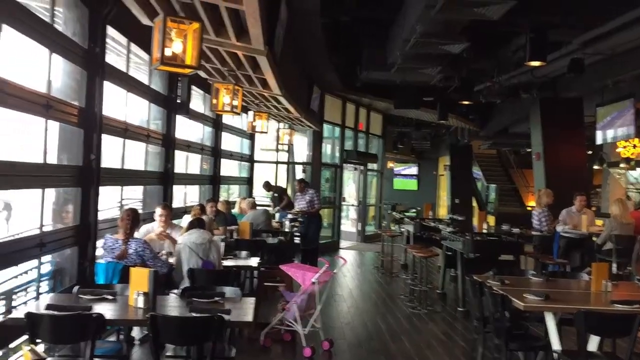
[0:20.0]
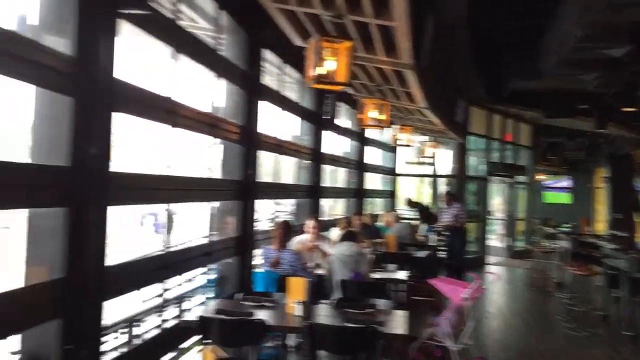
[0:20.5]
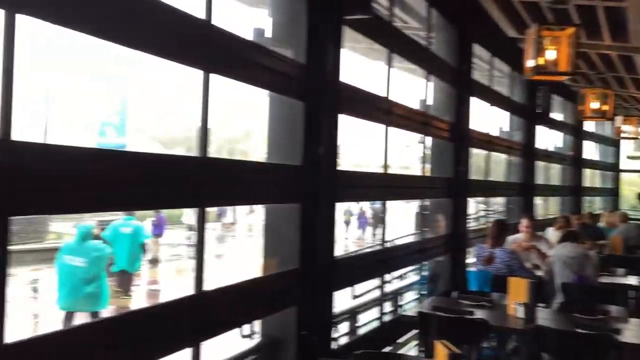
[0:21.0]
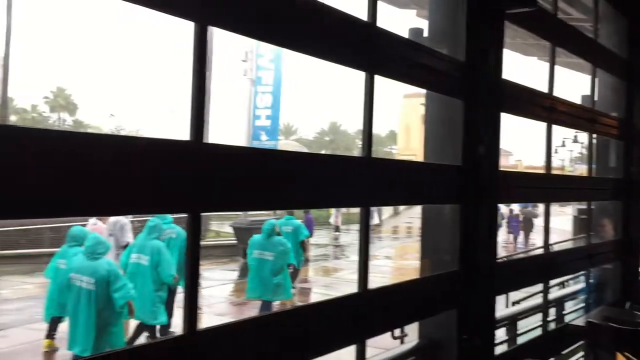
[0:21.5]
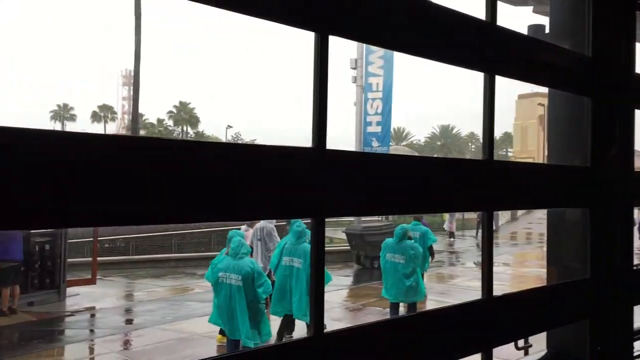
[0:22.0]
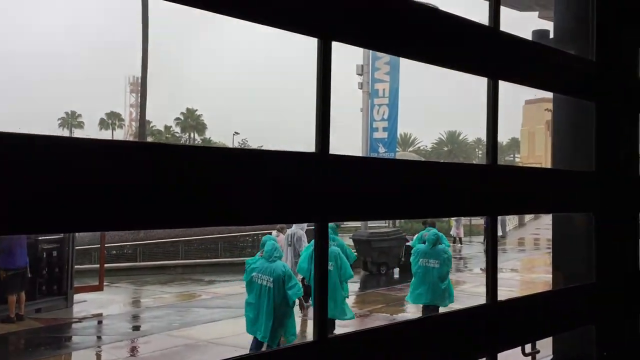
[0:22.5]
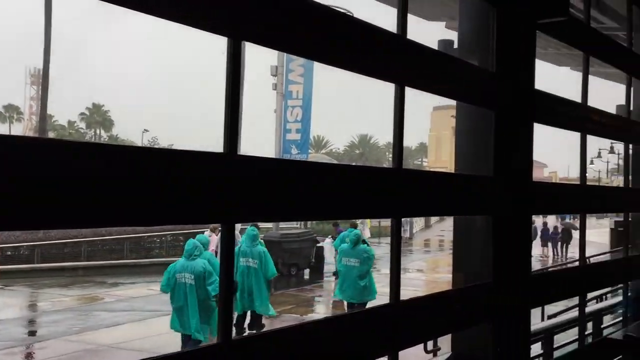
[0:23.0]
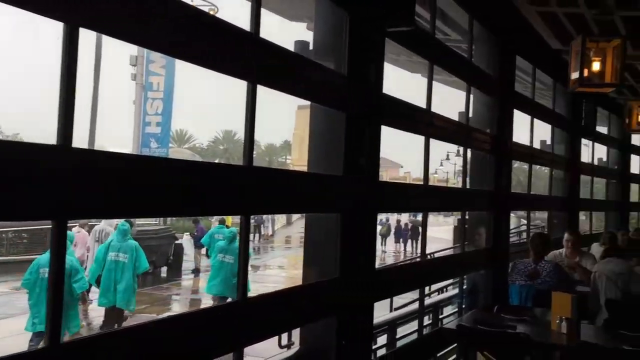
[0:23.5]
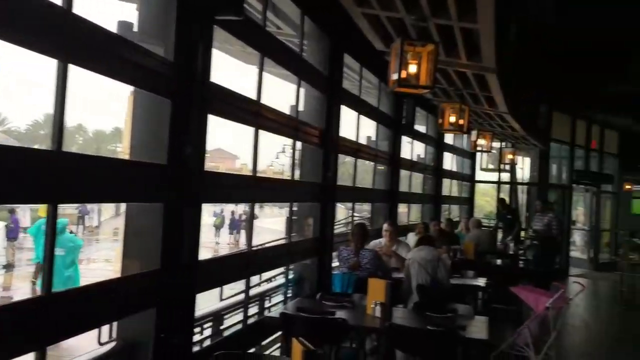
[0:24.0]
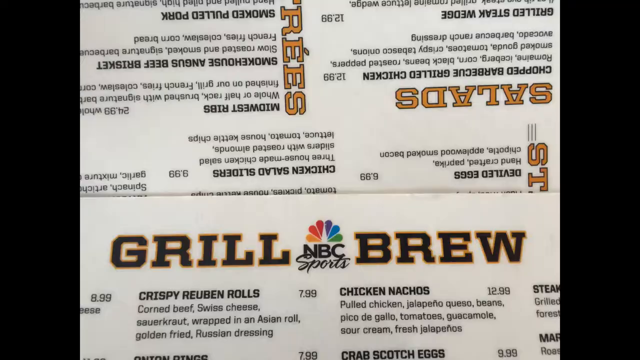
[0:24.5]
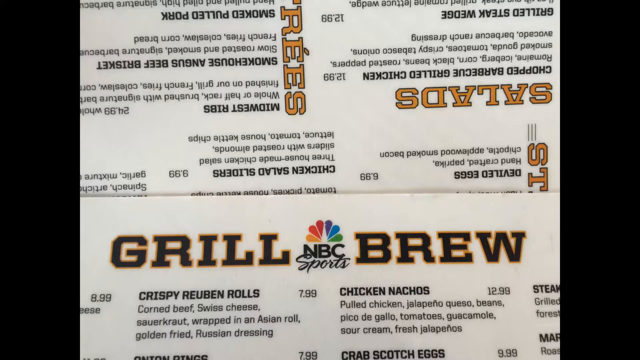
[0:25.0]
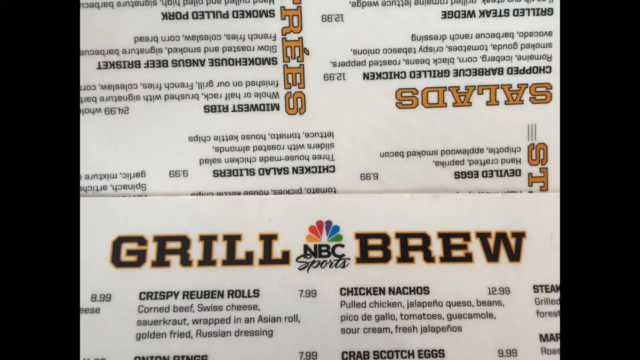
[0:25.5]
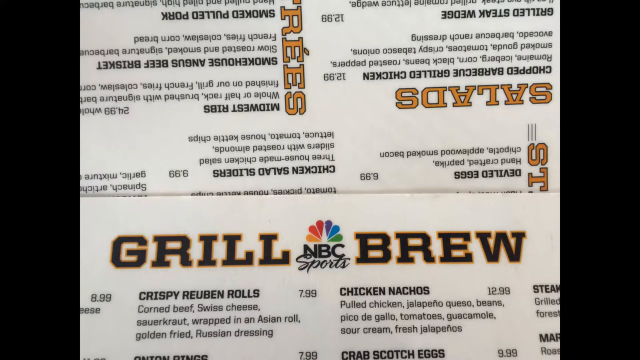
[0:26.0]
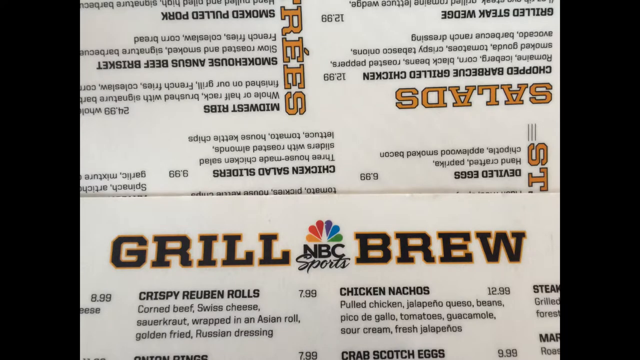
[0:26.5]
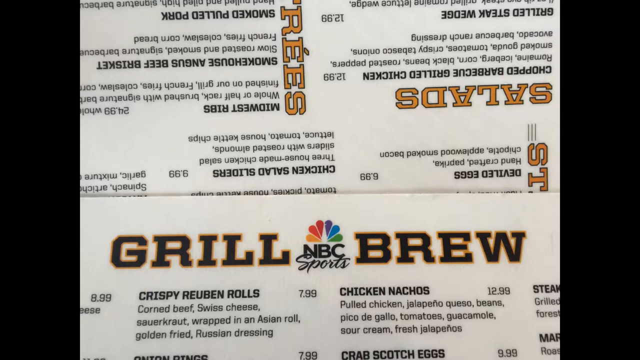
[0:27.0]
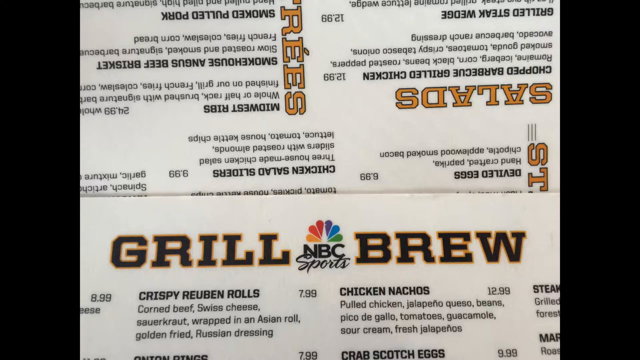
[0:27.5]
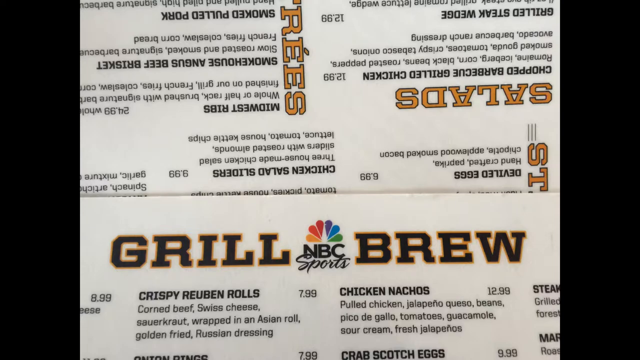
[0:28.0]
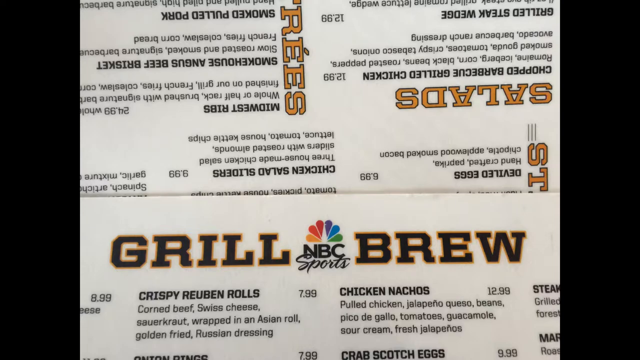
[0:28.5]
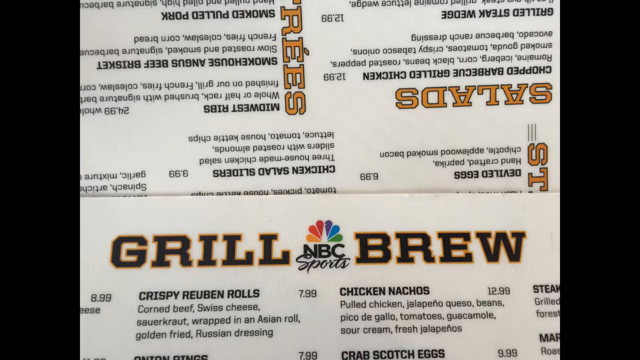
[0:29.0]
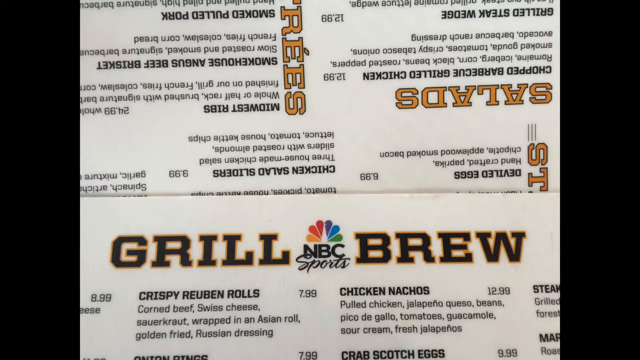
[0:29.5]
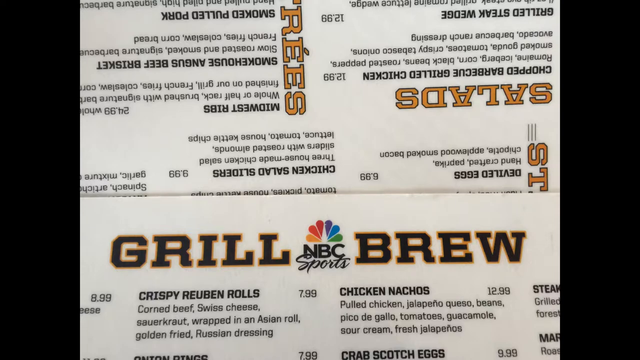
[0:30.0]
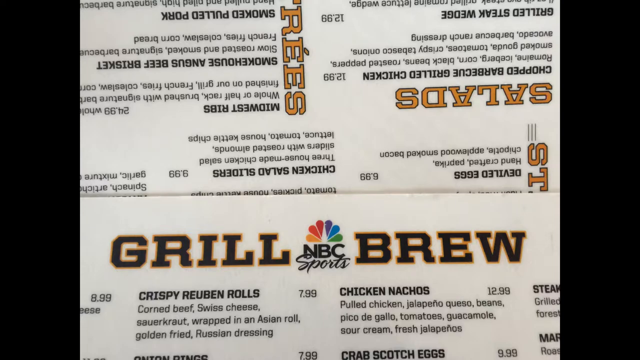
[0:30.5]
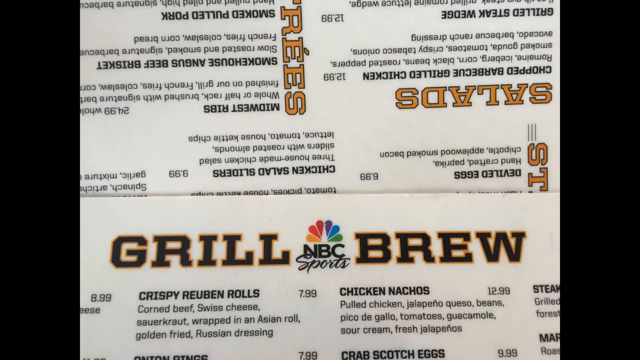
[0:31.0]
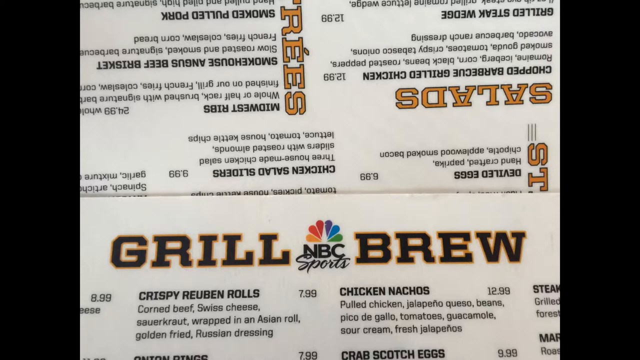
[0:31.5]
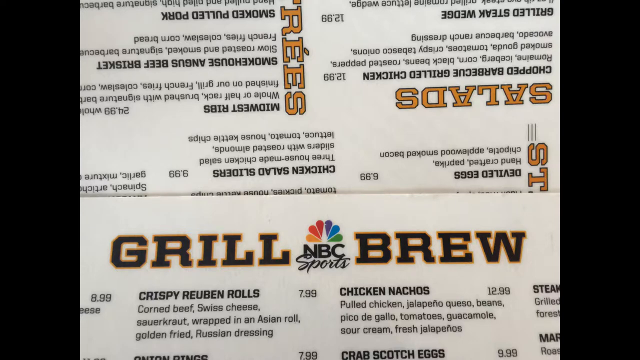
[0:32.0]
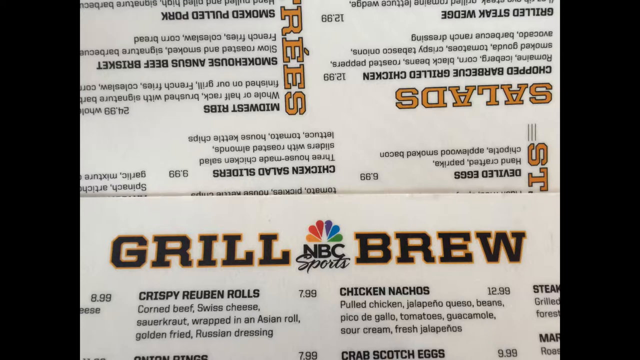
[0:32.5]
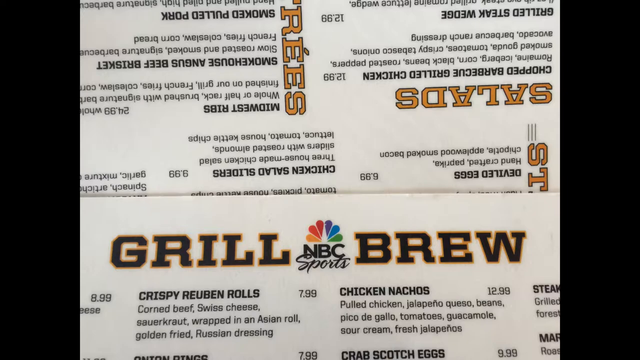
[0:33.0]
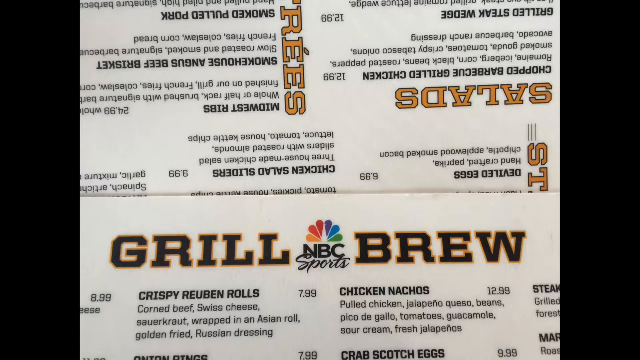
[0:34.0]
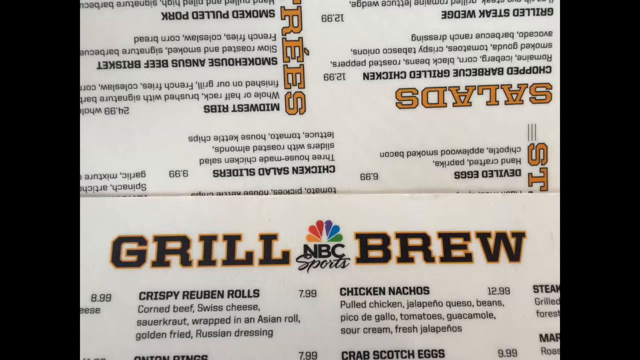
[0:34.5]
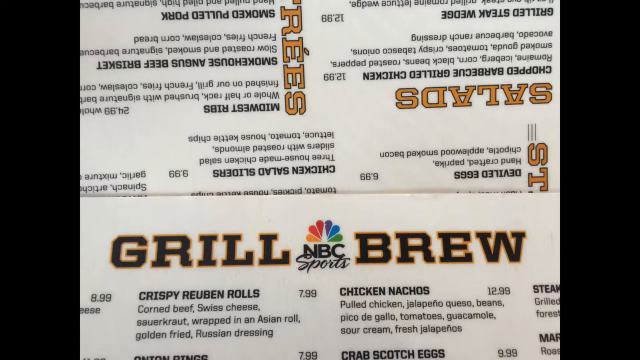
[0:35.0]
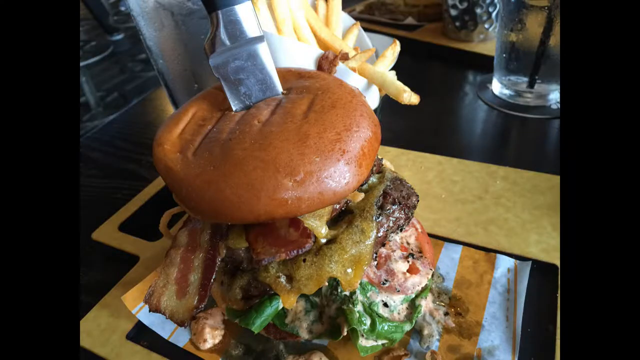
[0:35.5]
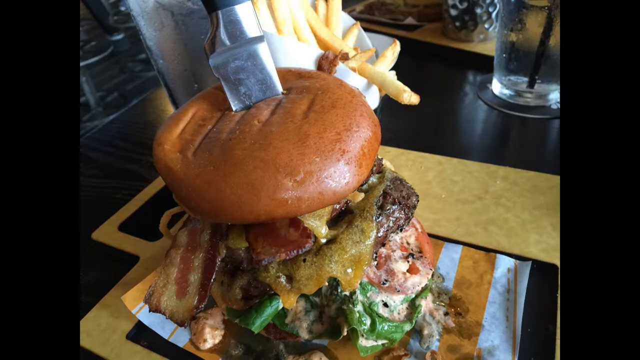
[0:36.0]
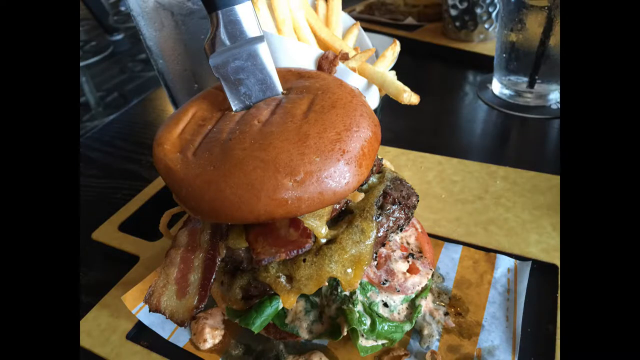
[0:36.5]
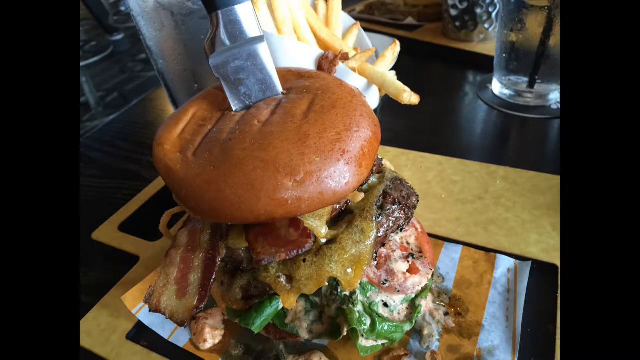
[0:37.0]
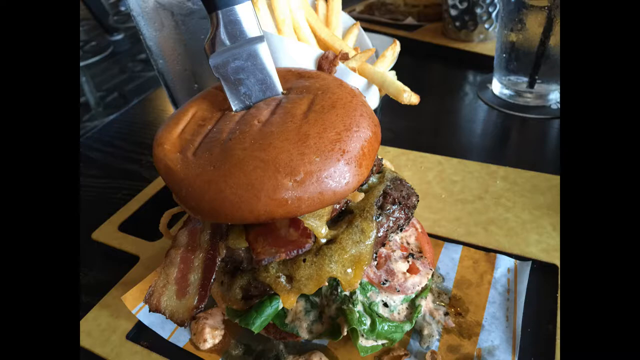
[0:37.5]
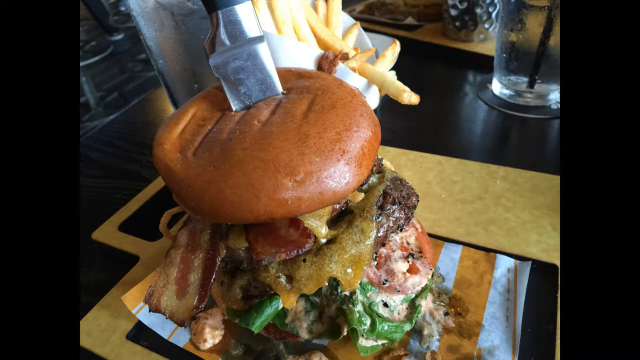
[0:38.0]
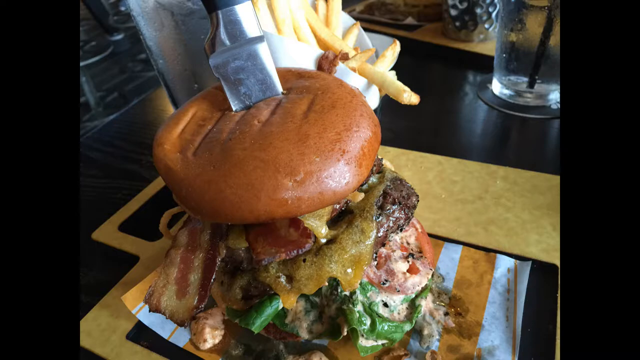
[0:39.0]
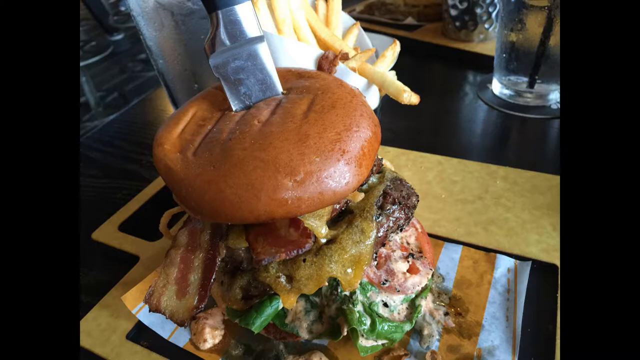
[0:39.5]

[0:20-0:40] The scene is inside what appears to be a restaurant with a wooden floor. Tables line the left and right sides, with various patrons sitting at them. Moving toward the left, the far left wall is all windows, divided by wood or metal running up and down to form pillars and cross sections; the windows are giant rectangles. To the left, a group of about six people walks on a multi-lane-wide soaked sidewalk along the windows, heading from the lower left toward the right center. The camera then pans back to the right and switches to a zoomed-in view of the menu. One page, upside down, is at the top occupying around two-thirds of the frame, and another page shows the menu header, "Grill Brew," in black capital letters with an orange outline. In the center is an NBC Sports logo.